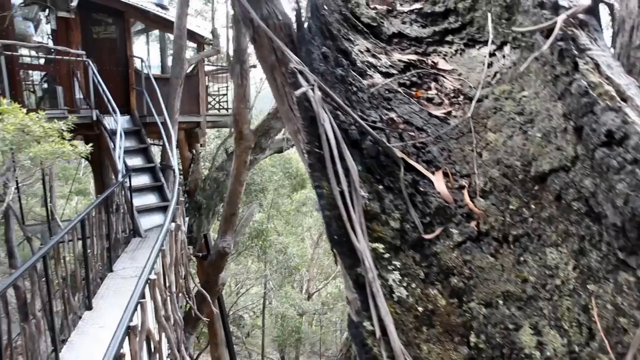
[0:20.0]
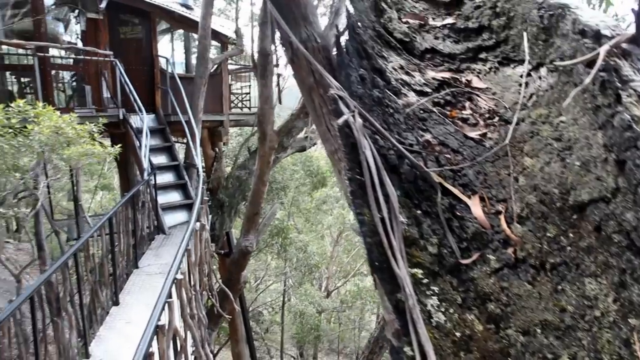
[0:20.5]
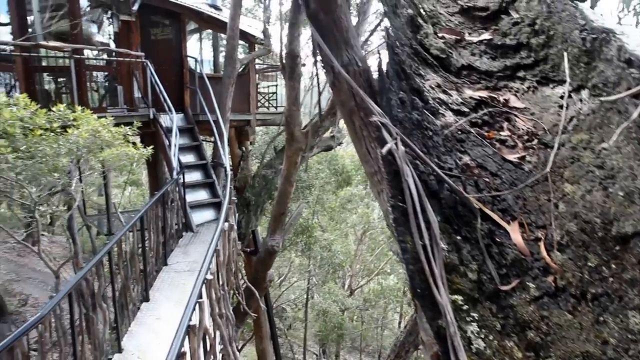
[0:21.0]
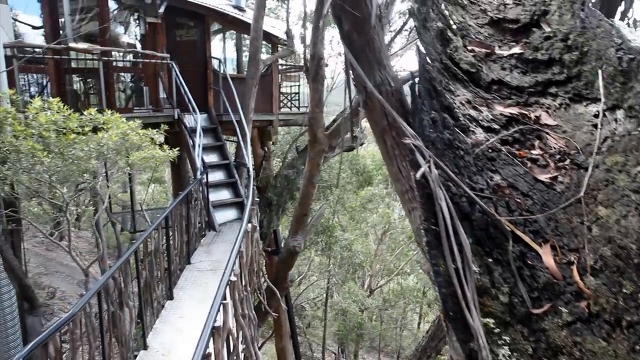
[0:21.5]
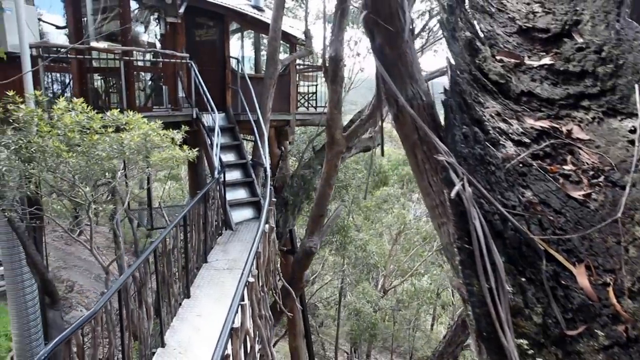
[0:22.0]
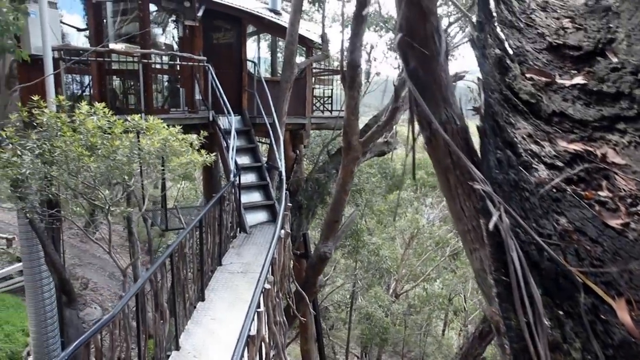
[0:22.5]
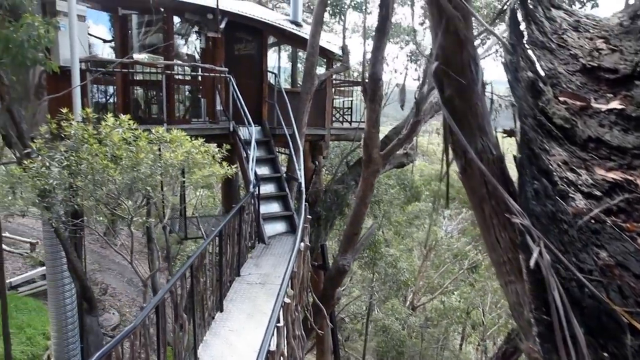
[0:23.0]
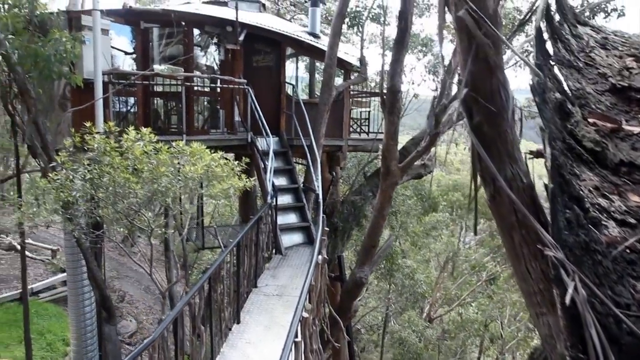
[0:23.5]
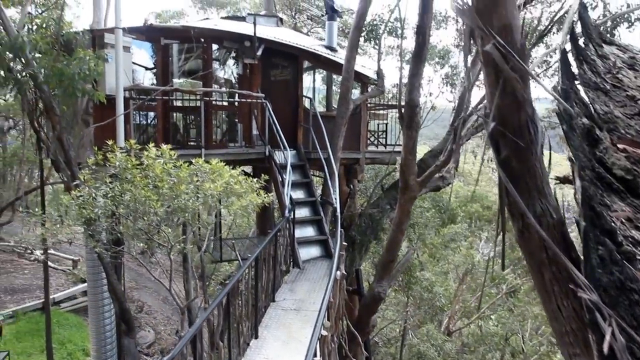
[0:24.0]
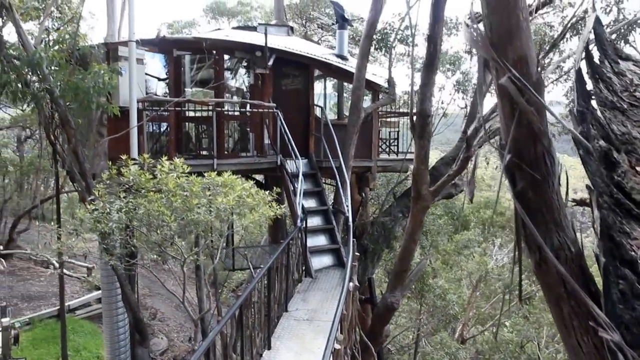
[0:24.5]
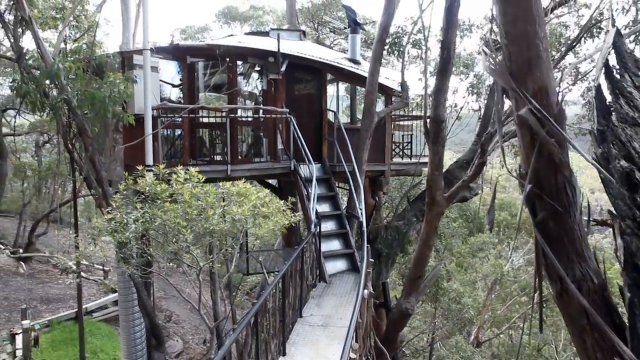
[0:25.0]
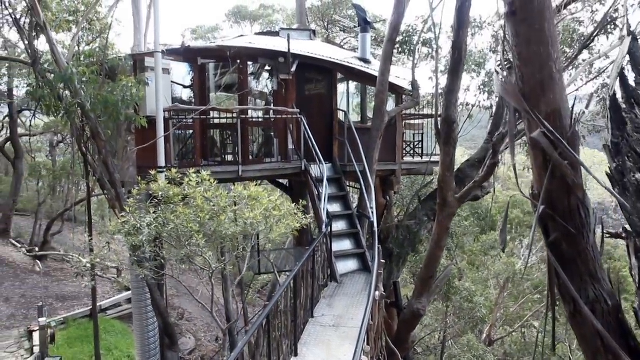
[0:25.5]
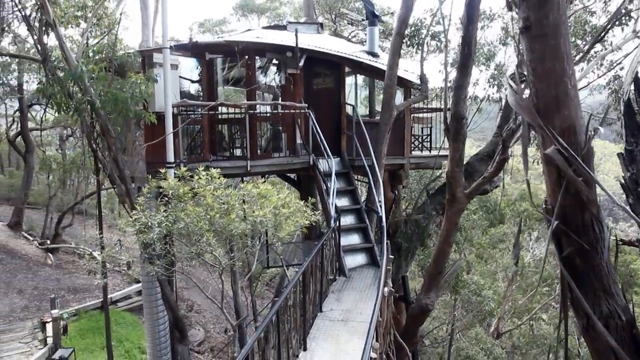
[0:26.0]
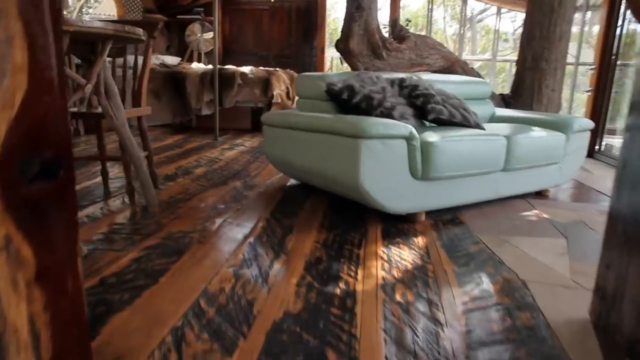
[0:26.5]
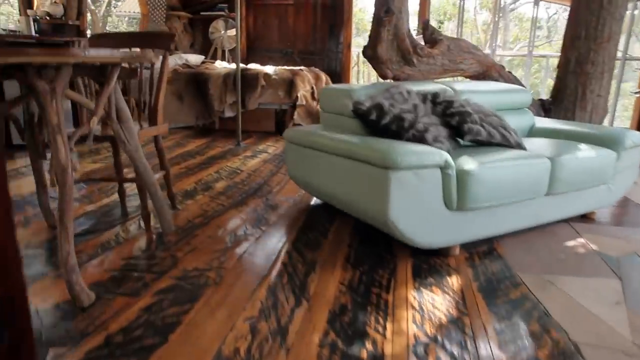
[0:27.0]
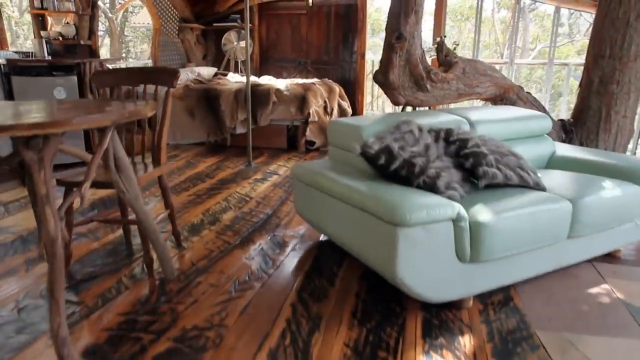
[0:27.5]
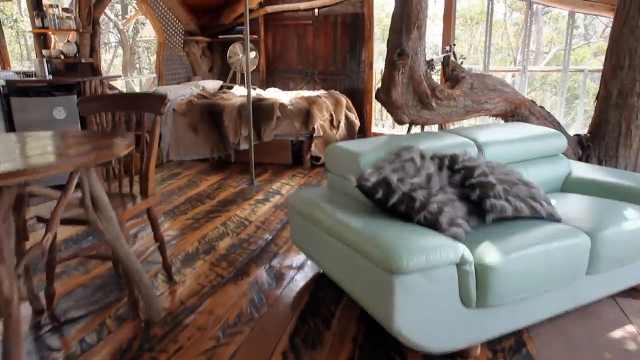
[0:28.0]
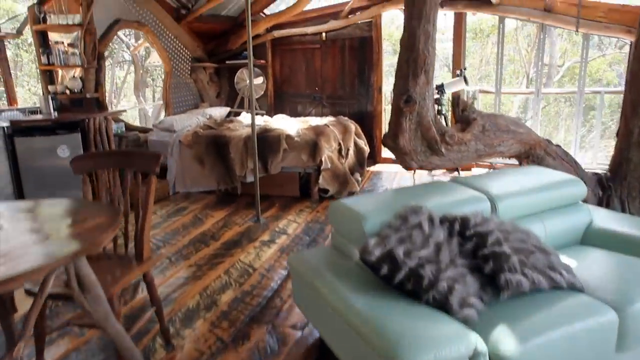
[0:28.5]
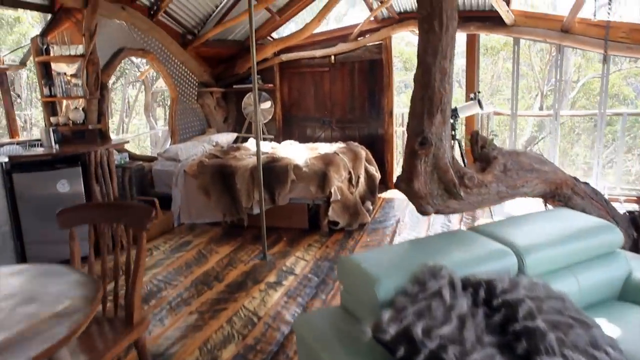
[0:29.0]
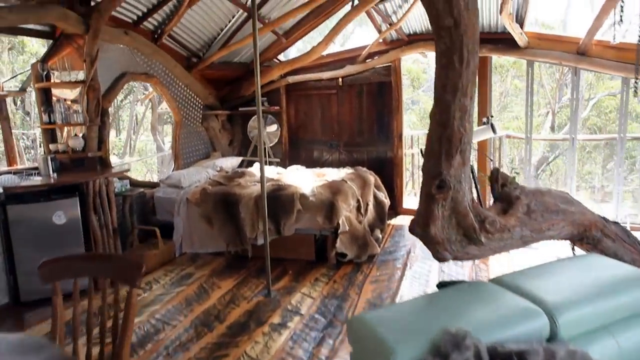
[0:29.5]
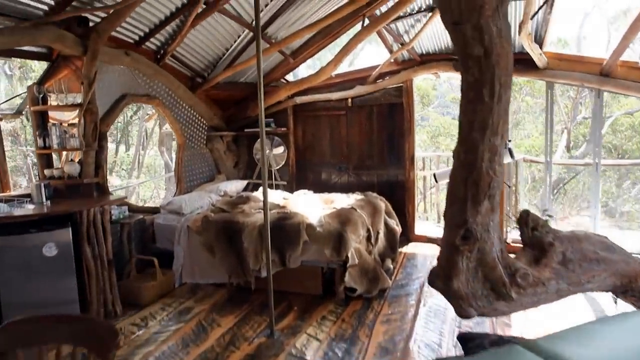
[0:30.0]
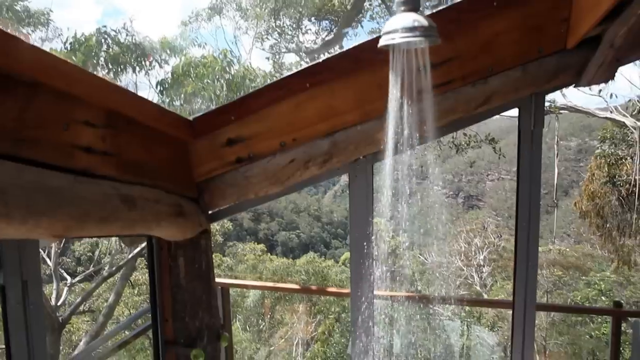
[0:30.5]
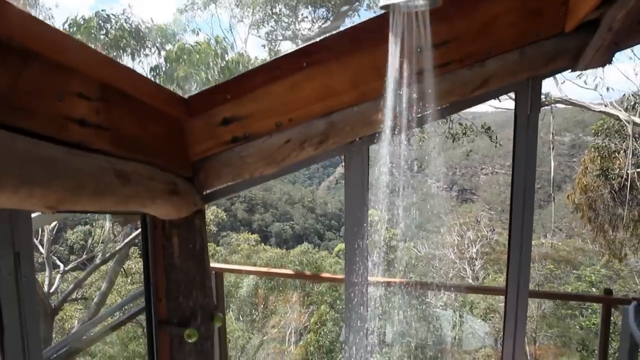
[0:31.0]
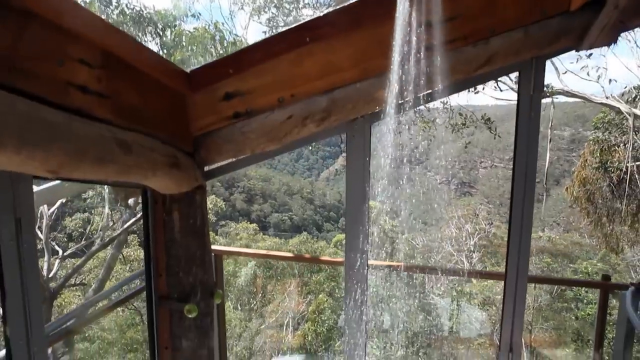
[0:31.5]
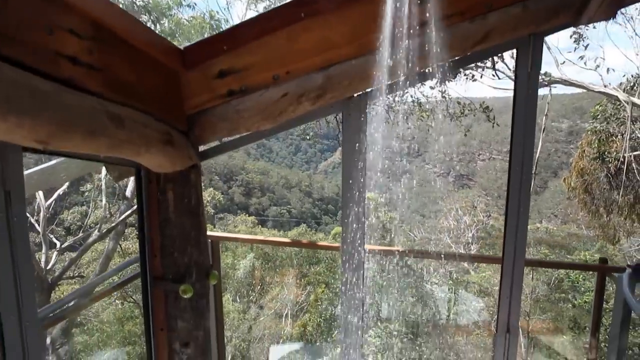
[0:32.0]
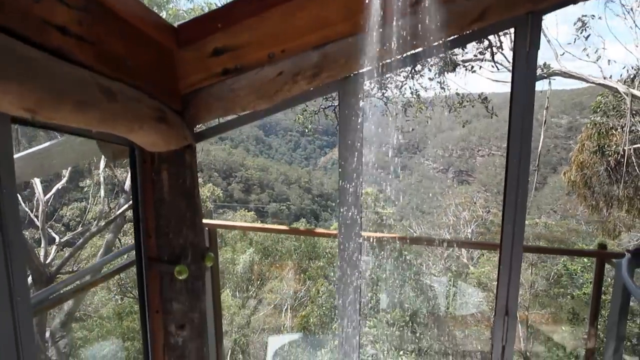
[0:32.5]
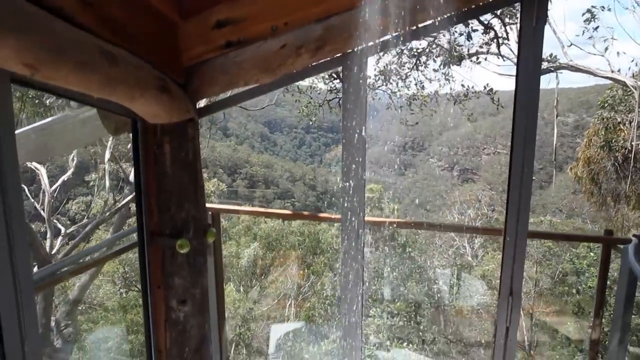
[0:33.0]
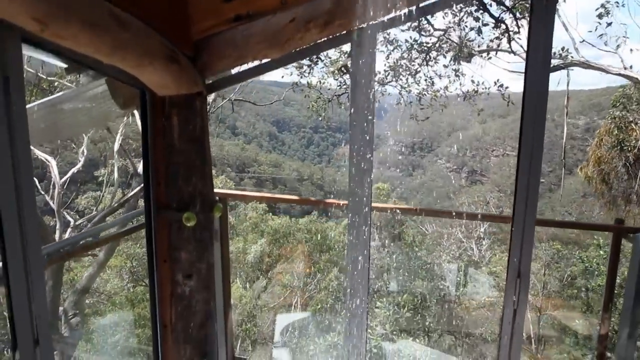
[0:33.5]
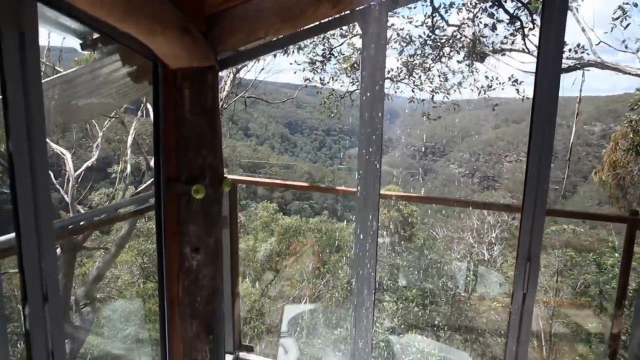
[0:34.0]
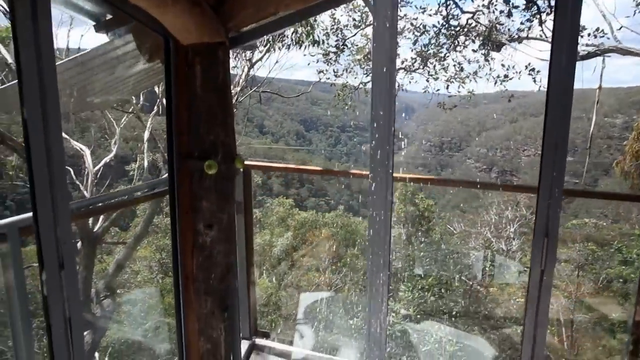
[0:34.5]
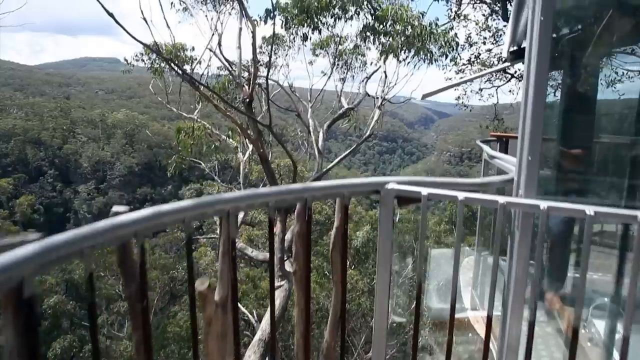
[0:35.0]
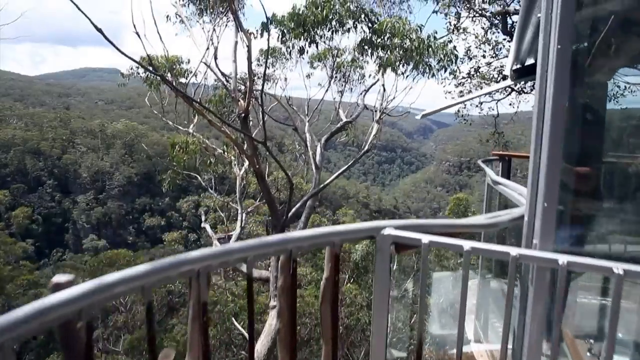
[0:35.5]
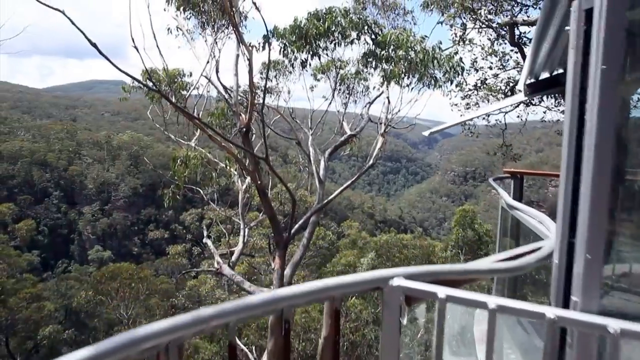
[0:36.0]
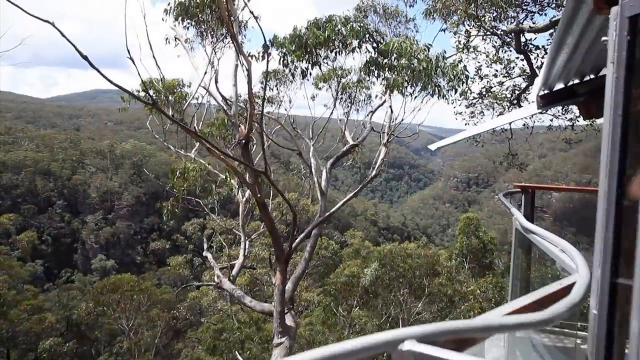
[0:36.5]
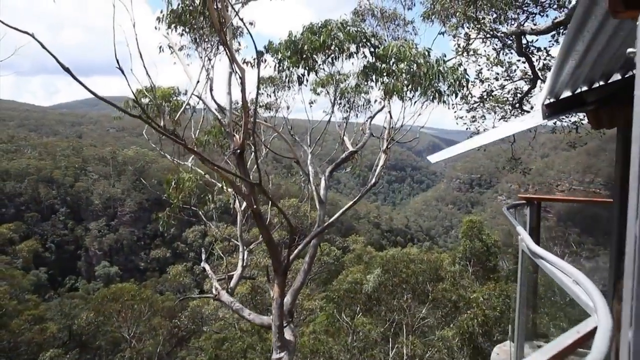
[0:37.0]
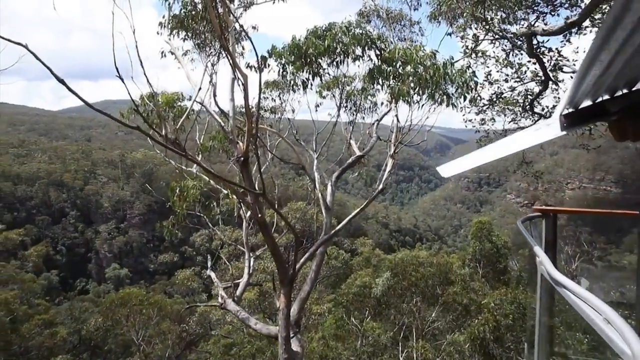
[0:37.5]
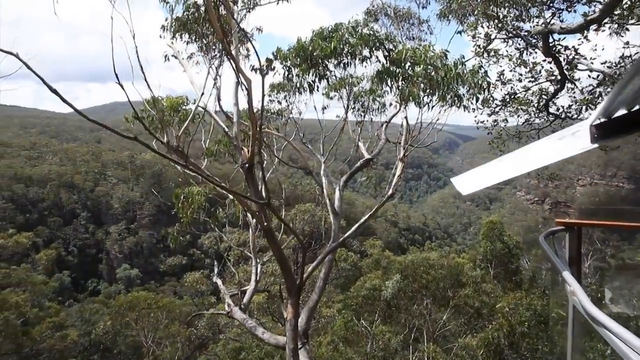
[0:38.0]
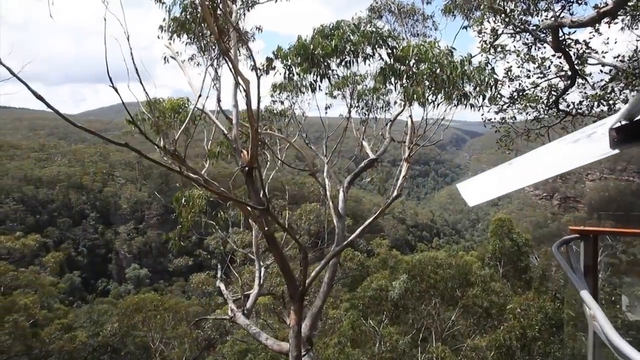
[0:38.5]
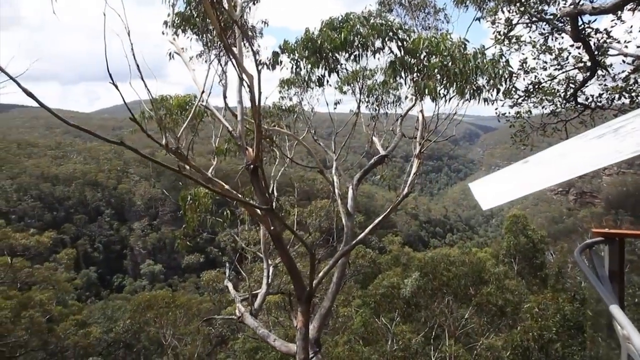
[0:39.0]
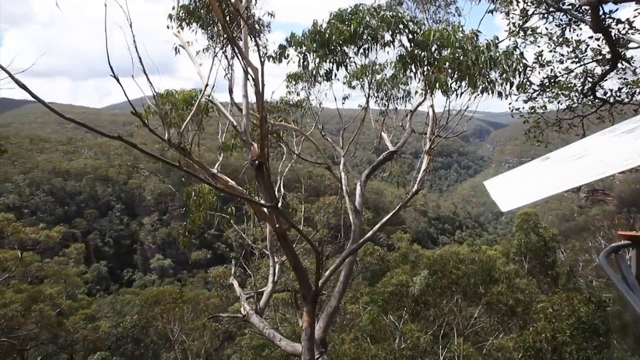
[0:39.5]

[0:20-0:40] A shot moves from right to left across the area with the treehouse, showing a little ladder leading up to it, with a bridge at the bottom of the ladder. The camera swoops up toward the treehouse, then cuts inside. There is a seafoam green couch with pillows on it and a giant branch going through the center of the treehouse, on the left side. What looks like a wood table is in the background, and there is a bed with what looks like possibly an animal skin blanket on top. Part of the roof is shown, apparently an aluminum roof. The video then cuts to what looks like the shower area, where a shower head pours water downward; behind it, large glass windows show the forest area outside.